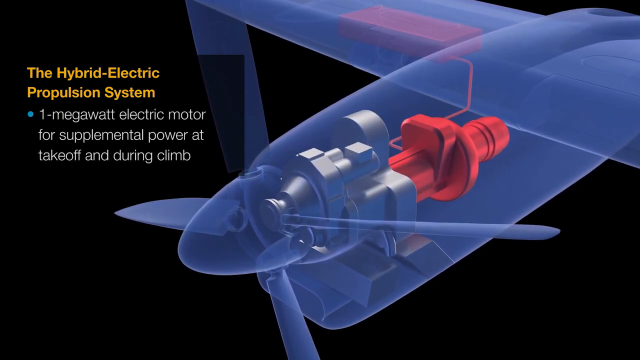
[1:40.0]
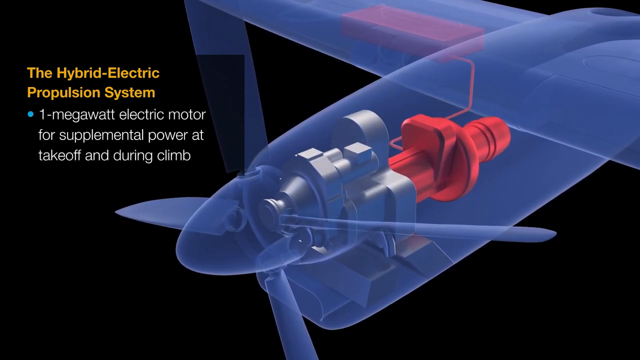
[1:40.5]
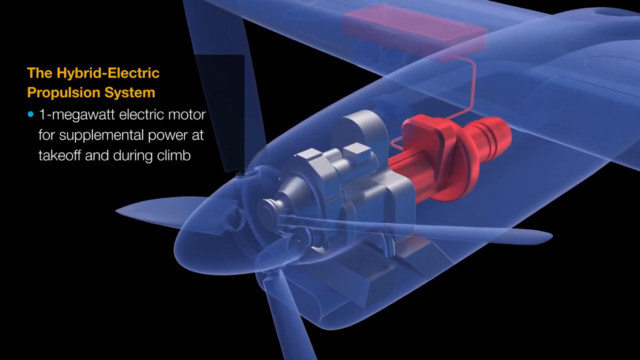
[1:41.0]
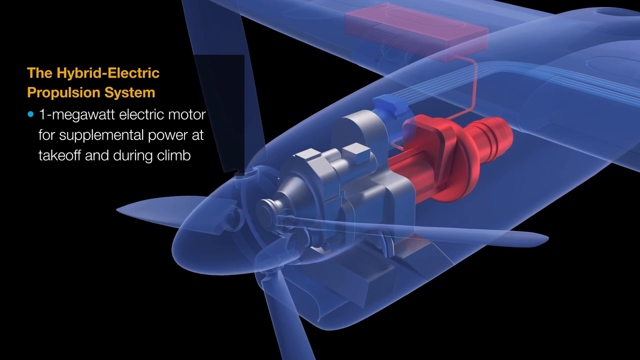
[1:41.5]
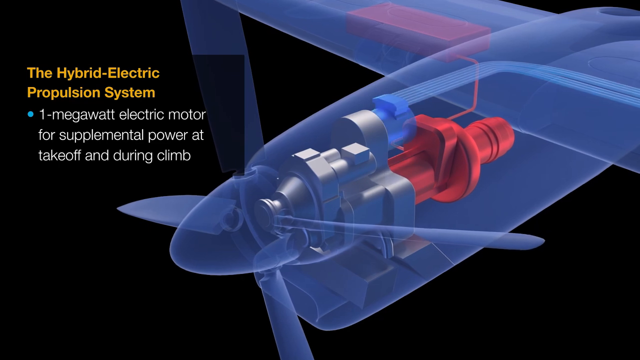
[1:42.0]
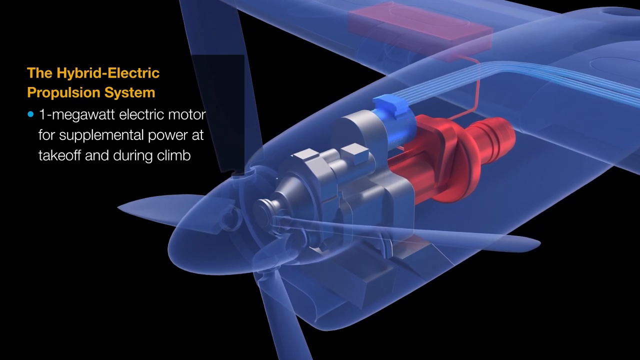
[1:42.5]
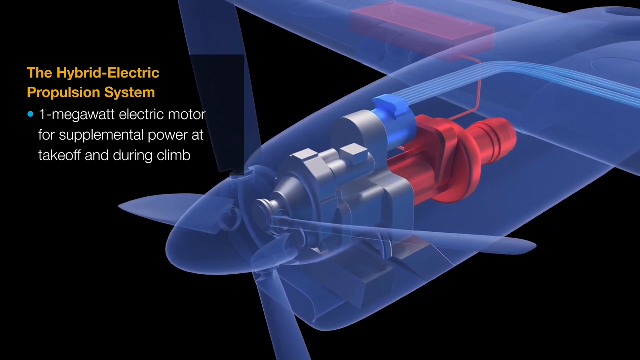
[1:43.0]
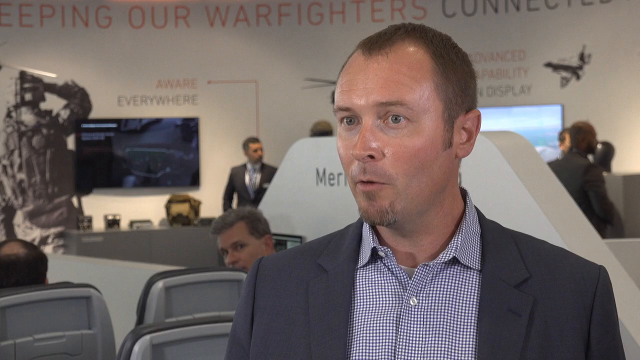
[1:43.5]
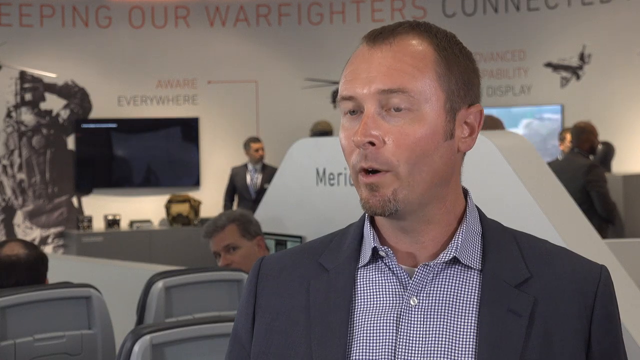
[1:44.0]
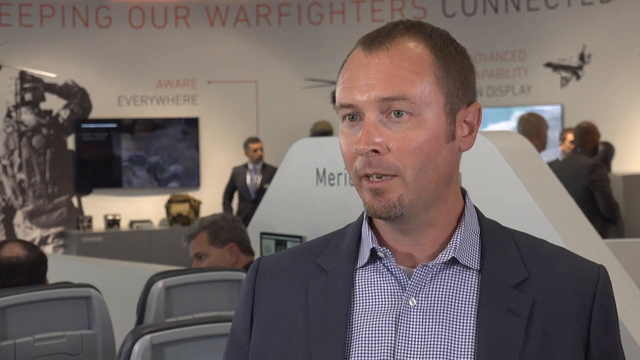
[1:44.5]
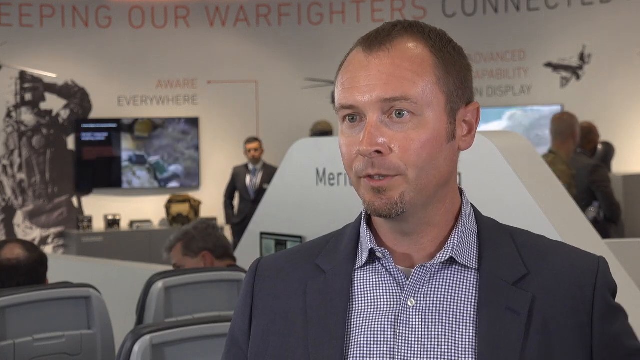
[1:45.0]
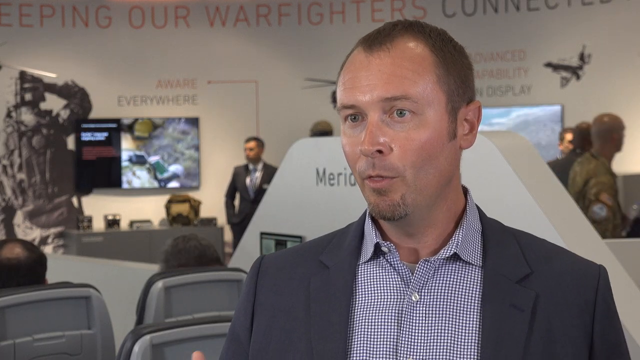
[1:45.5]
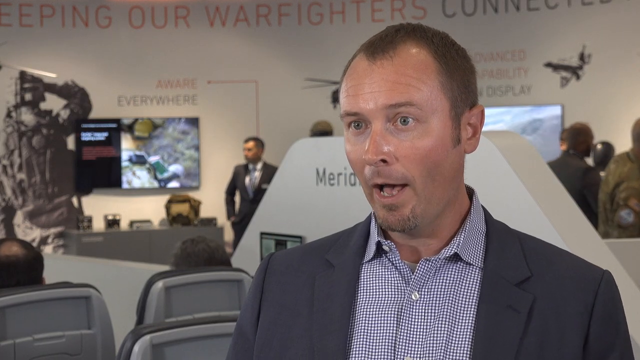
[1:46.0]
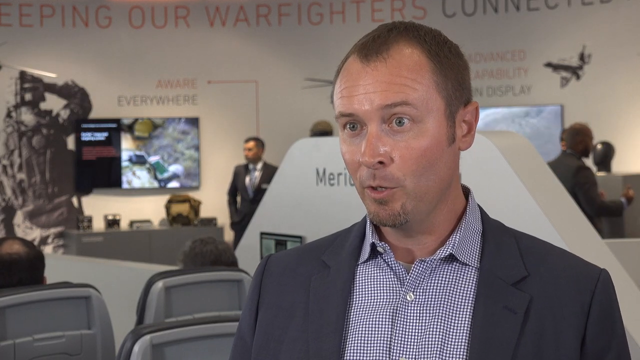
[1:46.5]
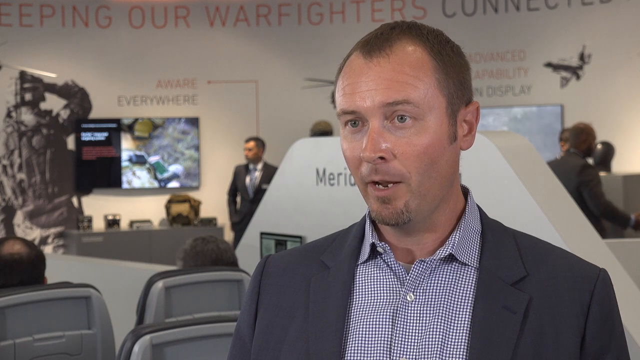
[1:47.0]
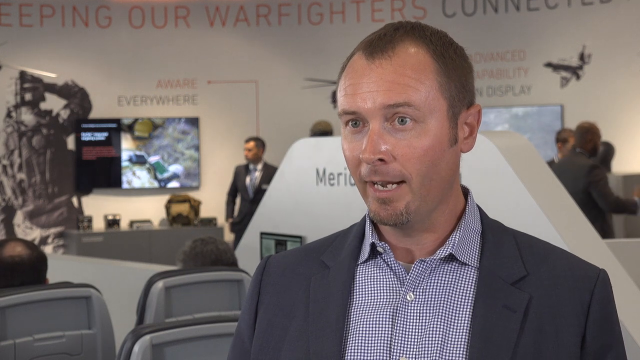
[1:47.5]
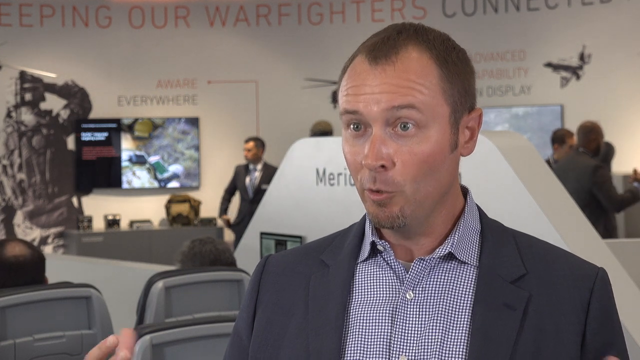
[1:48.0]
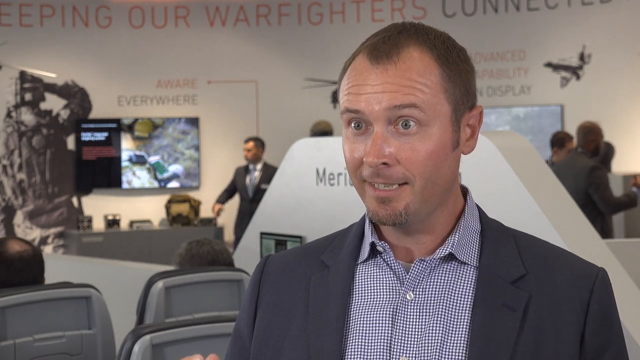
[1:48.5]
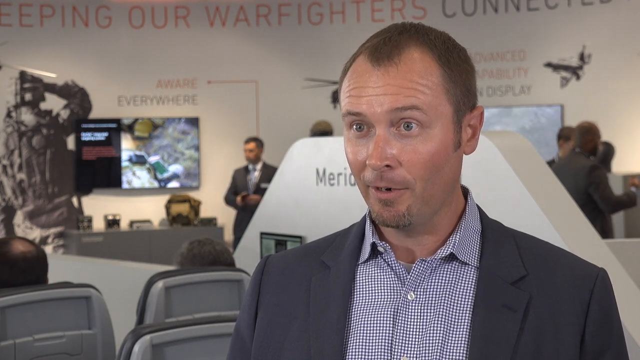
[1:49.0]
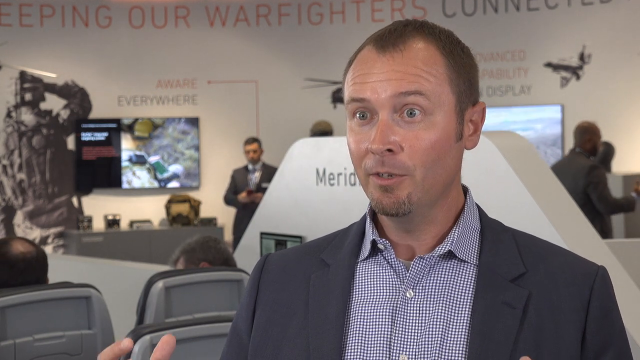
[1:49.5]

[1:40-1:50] The hybrid electric propulsion system diagram of the X-plane is shown, with text stating a one megawatt electric motor for supplemental power for takeoff and climb. The view then goes into a spinning panoramic of the motor, and the leader of the project appears, looking very excited.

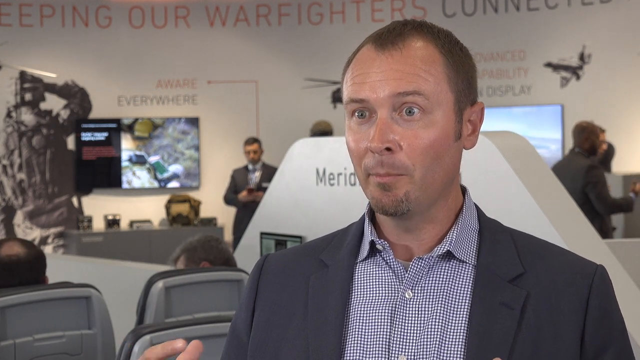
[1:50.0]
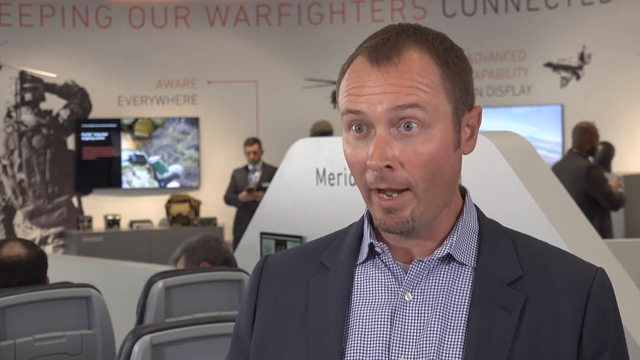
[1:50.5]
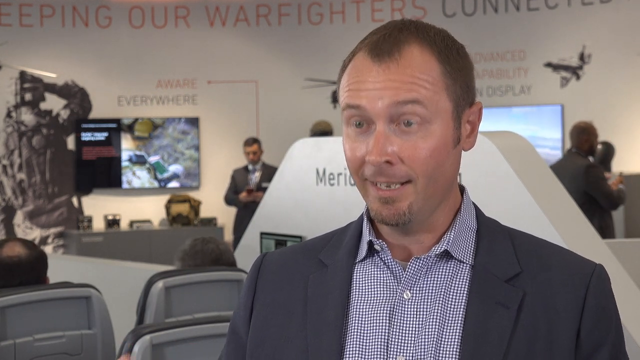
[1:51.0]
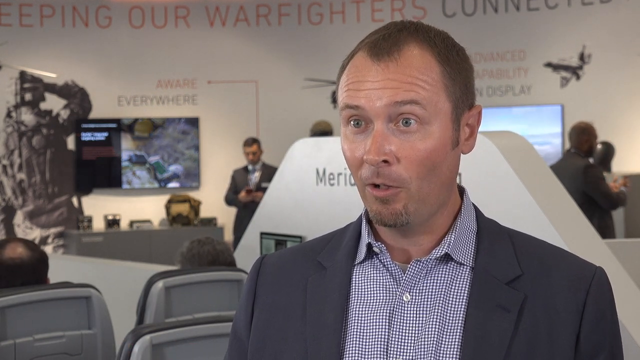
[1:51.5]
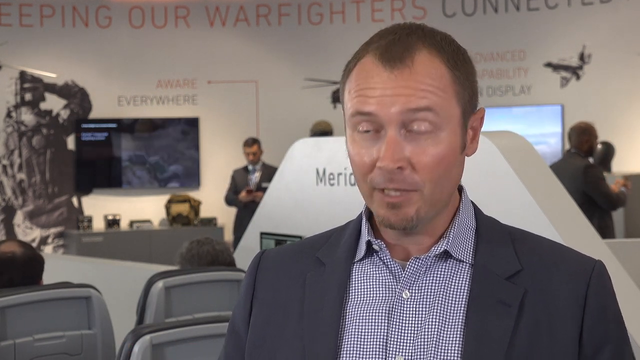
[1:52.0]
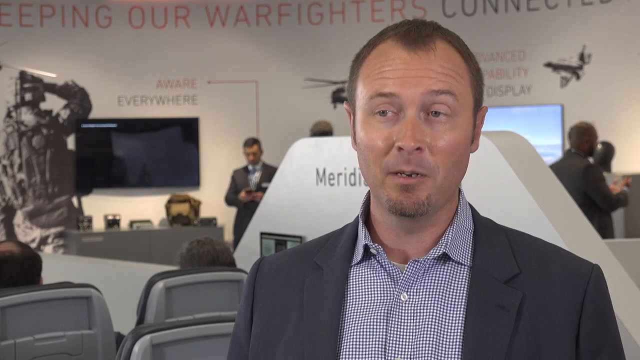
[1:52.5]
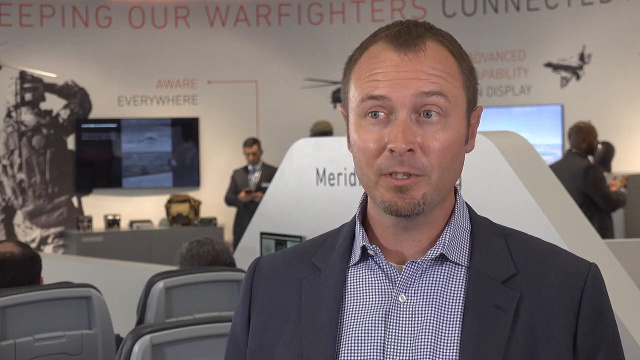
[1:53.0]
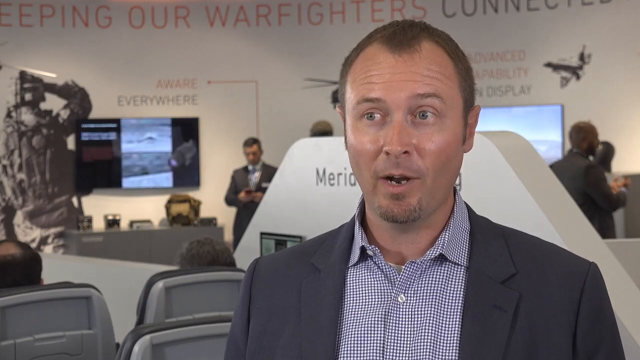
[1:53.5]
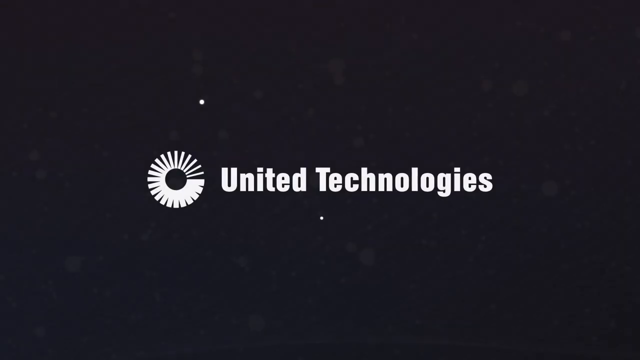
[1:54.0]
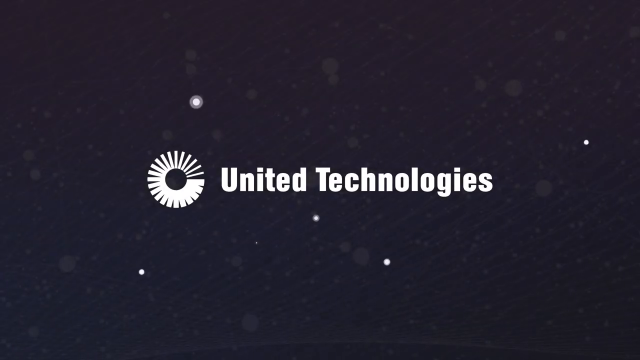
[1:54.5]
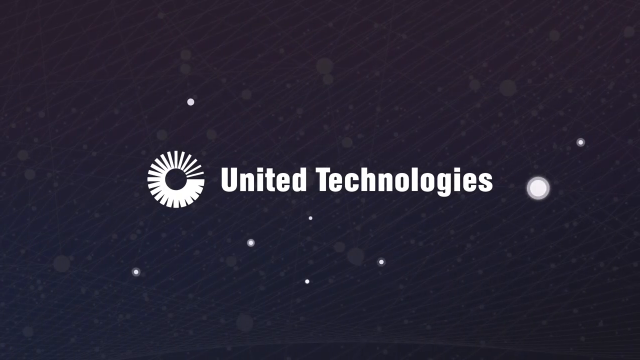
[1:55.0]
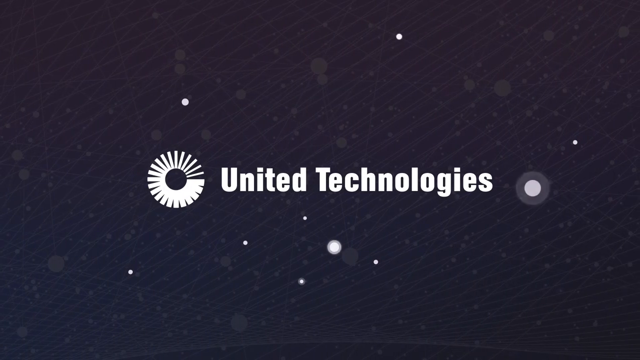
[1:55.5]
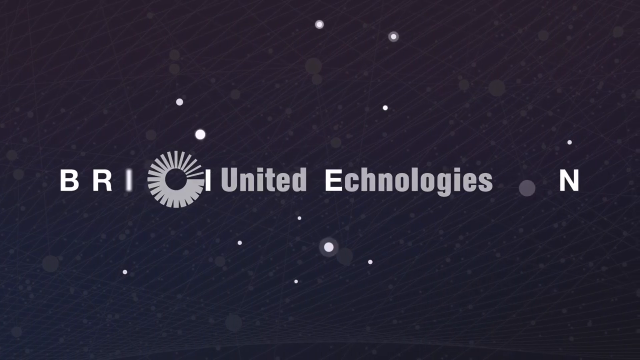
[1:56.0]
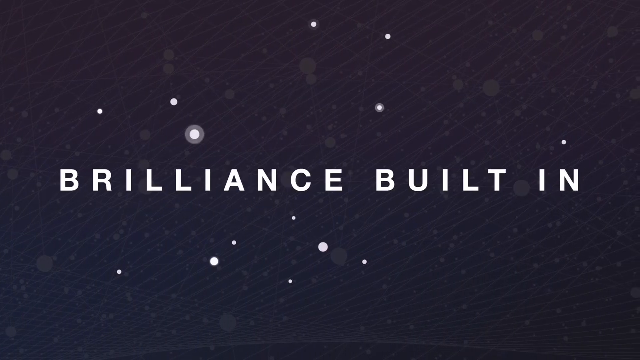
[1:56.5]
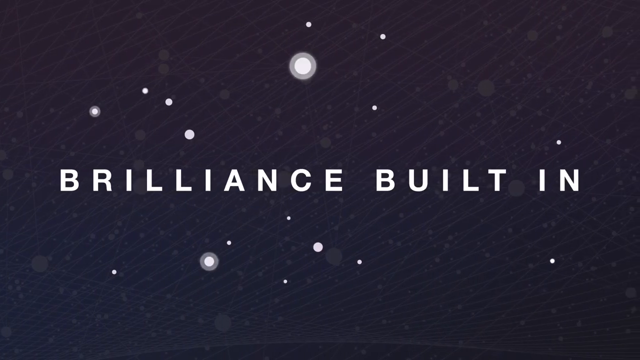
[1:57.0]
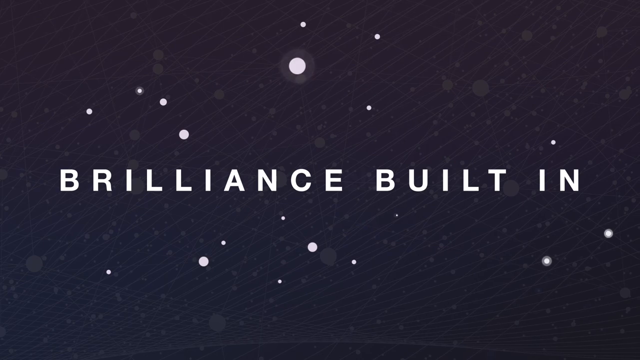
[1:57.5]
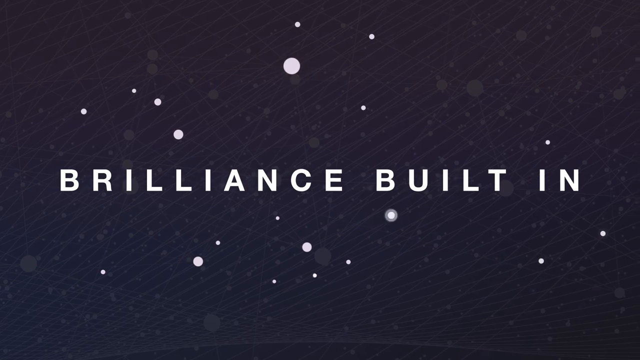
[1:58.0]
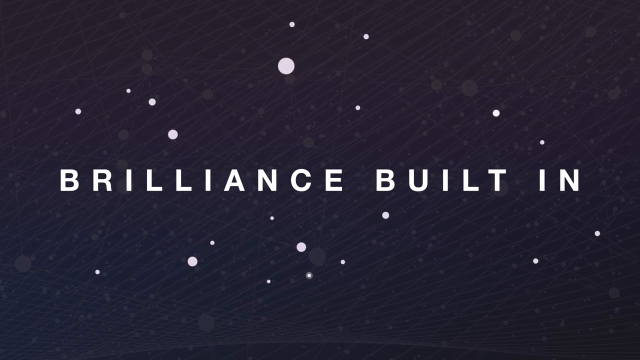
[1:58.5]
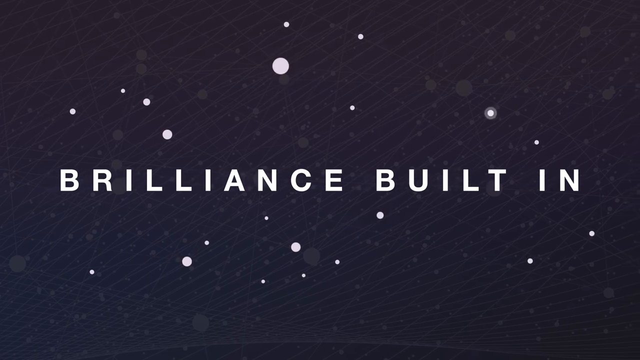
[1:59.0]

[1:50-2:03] The leader of Project 804 is at a conference, the Warfighters Conference, speaking to the media. He appears animated and excited. The United Technologies symbol is then shown, followed by the words "brilliance built in." Throughout, the project manager appears excited while talking.